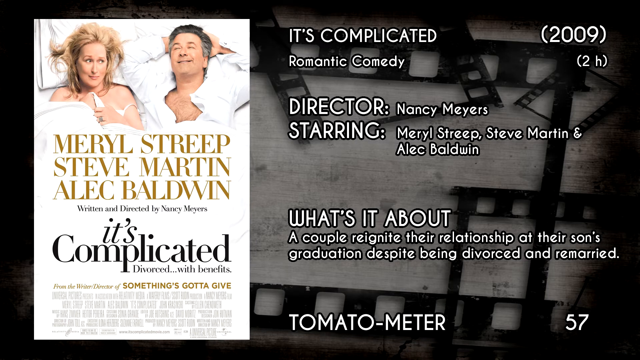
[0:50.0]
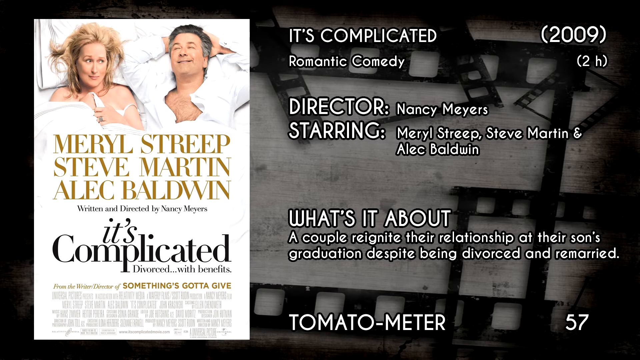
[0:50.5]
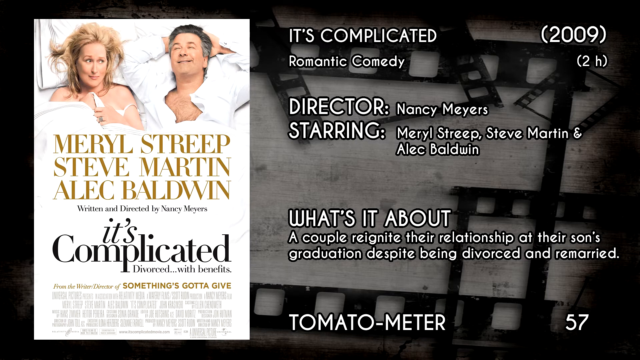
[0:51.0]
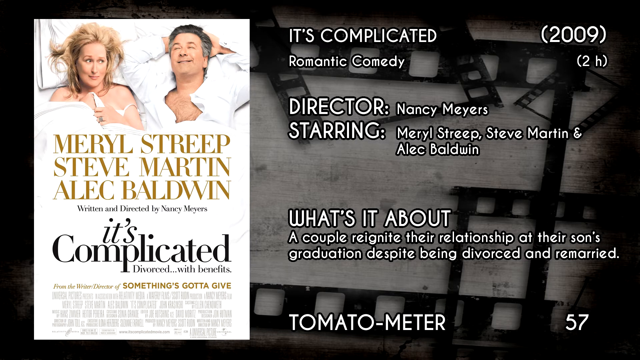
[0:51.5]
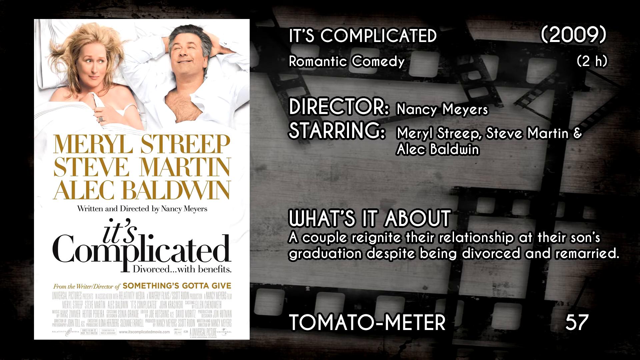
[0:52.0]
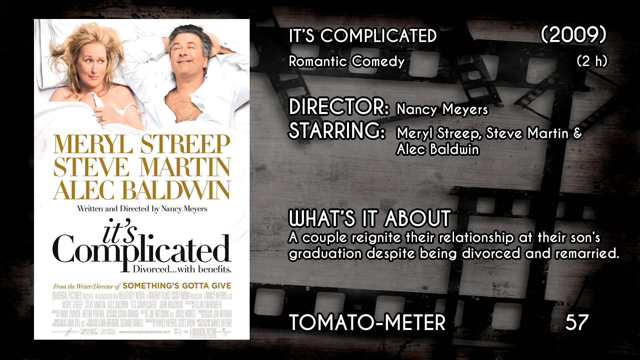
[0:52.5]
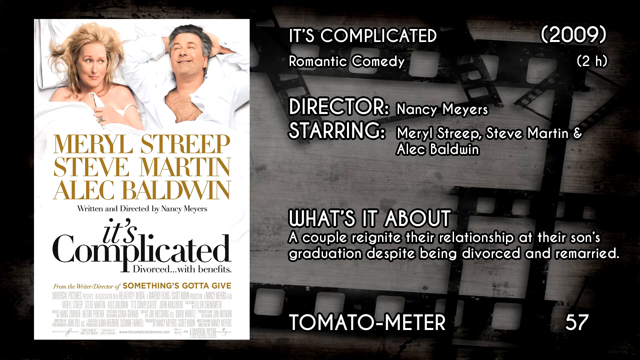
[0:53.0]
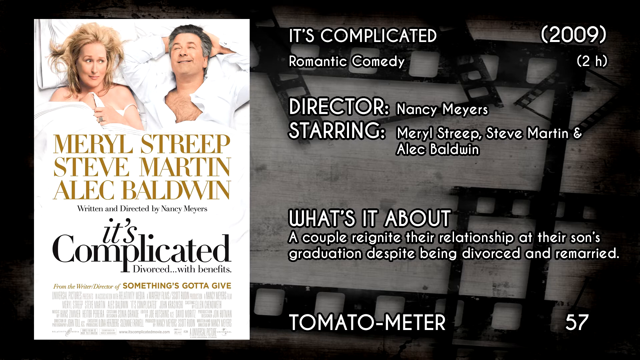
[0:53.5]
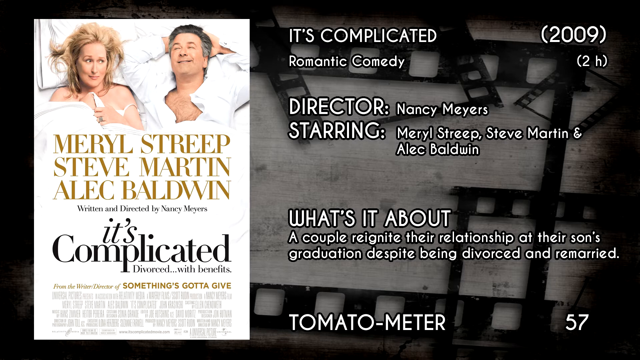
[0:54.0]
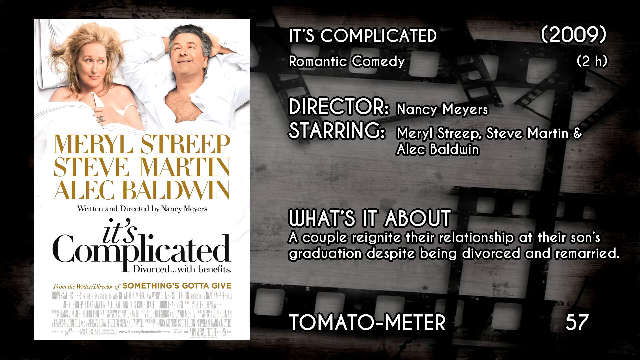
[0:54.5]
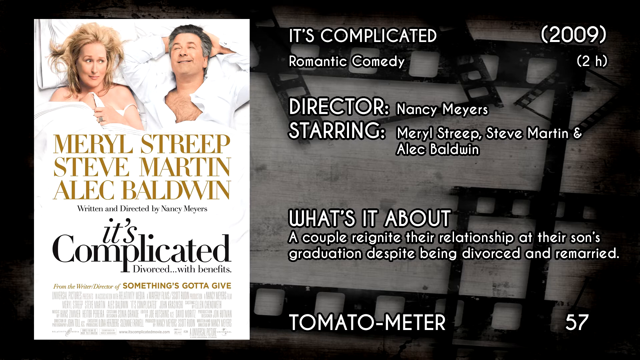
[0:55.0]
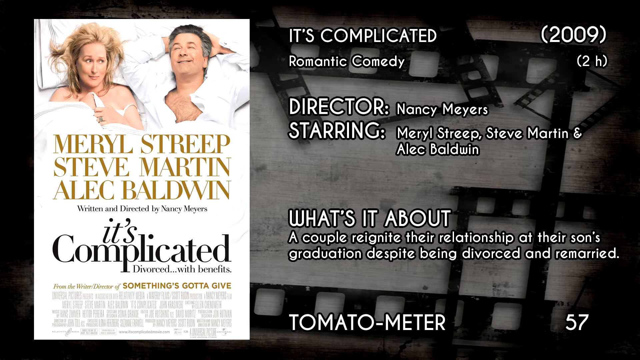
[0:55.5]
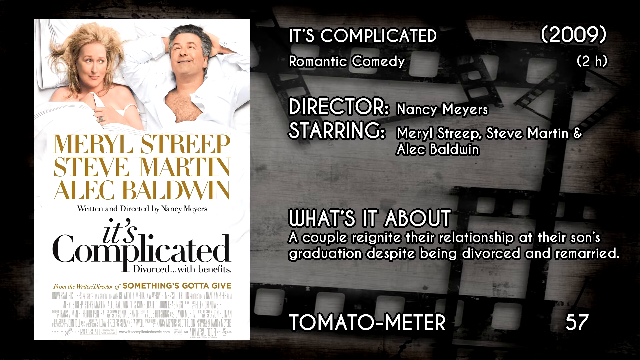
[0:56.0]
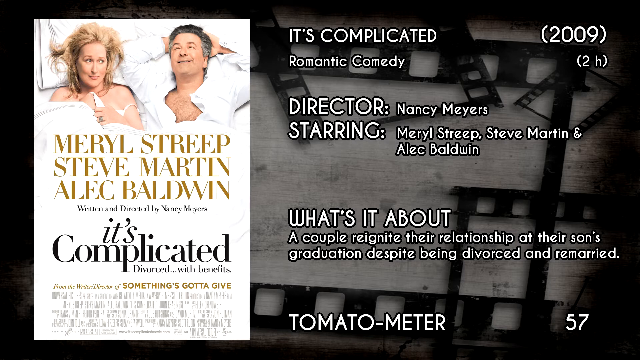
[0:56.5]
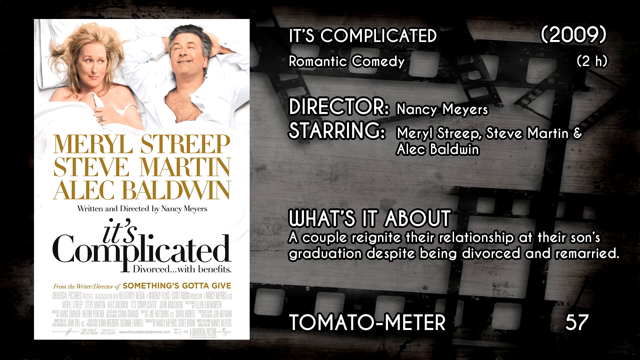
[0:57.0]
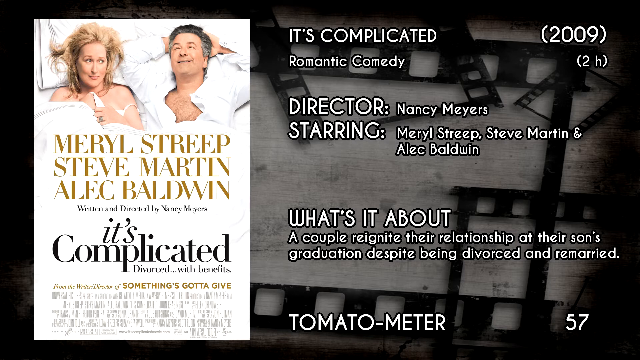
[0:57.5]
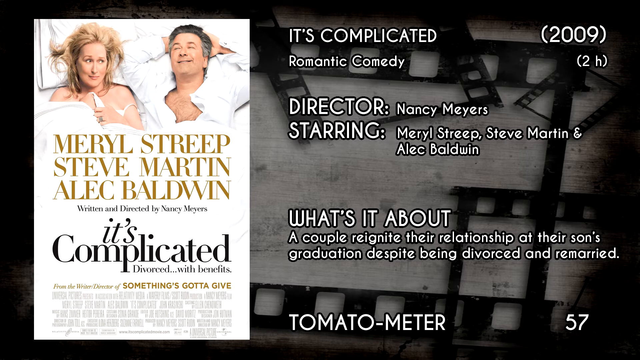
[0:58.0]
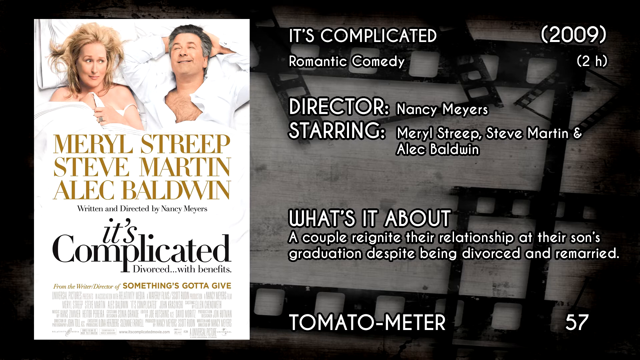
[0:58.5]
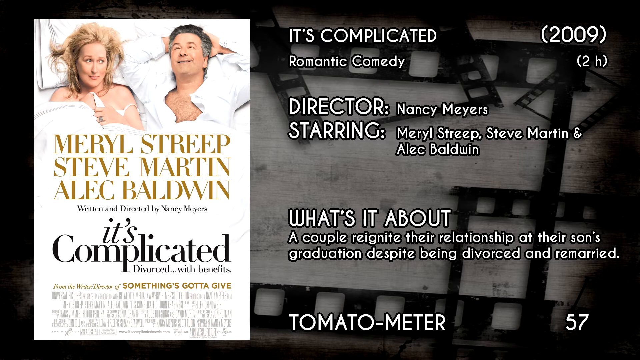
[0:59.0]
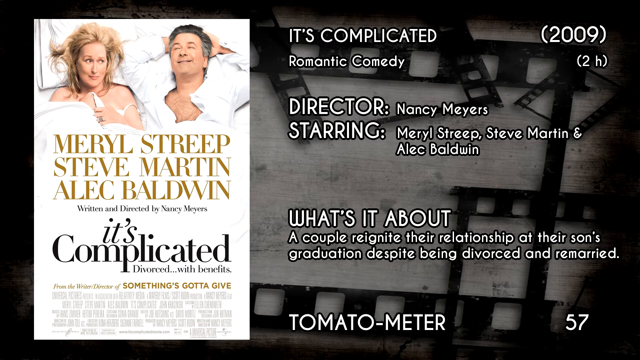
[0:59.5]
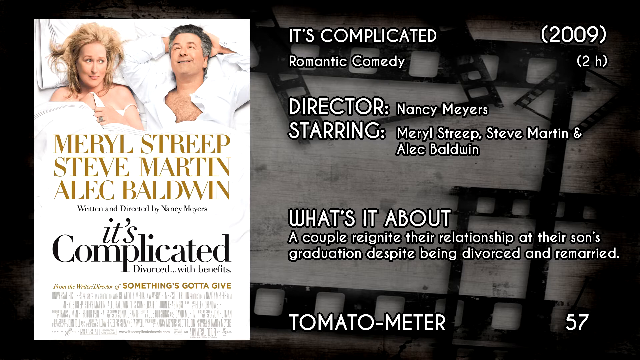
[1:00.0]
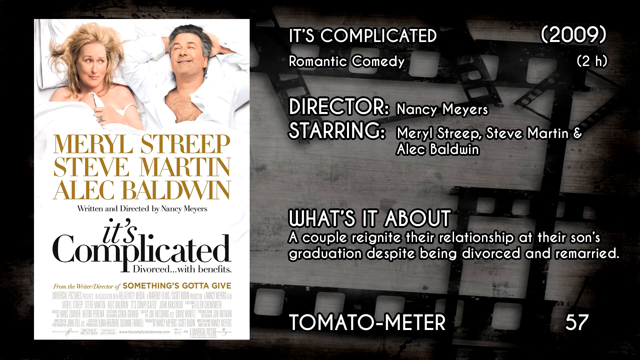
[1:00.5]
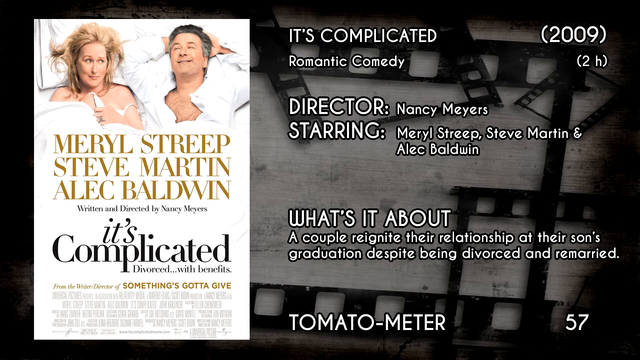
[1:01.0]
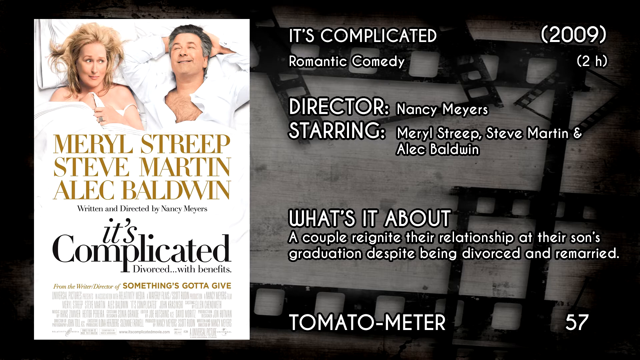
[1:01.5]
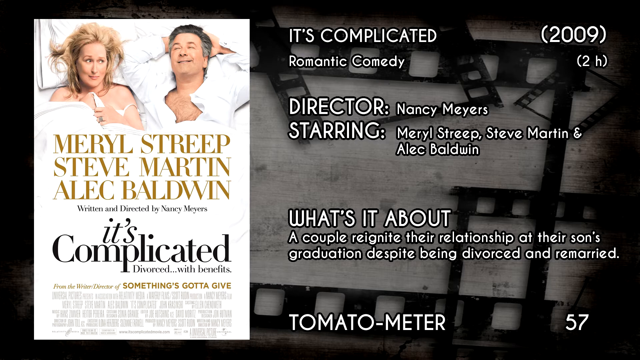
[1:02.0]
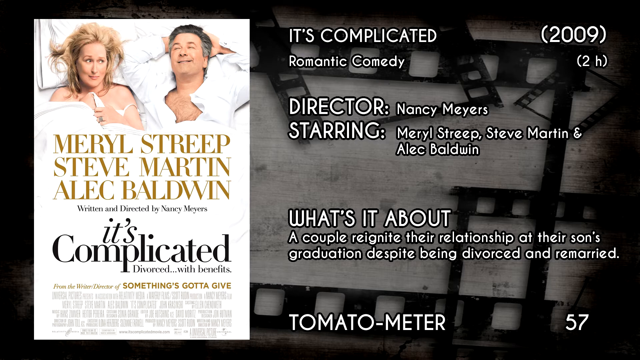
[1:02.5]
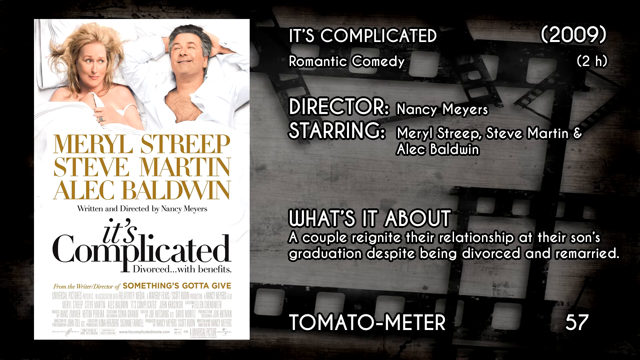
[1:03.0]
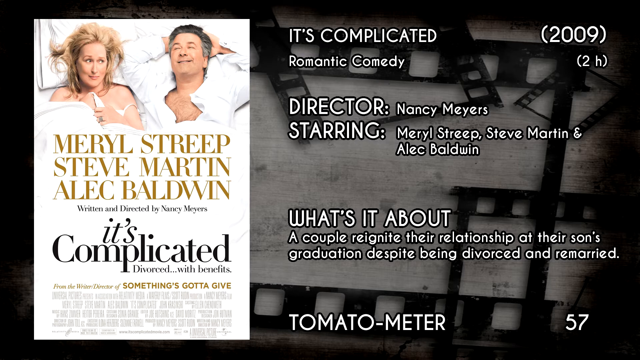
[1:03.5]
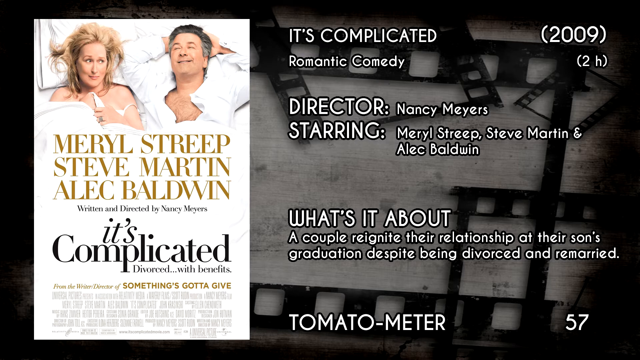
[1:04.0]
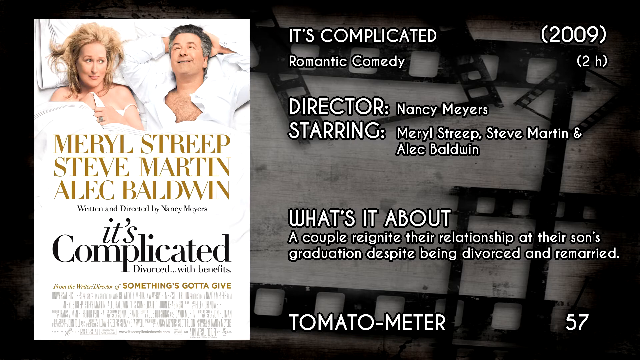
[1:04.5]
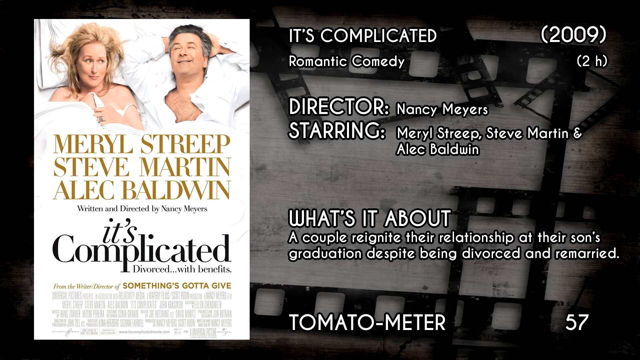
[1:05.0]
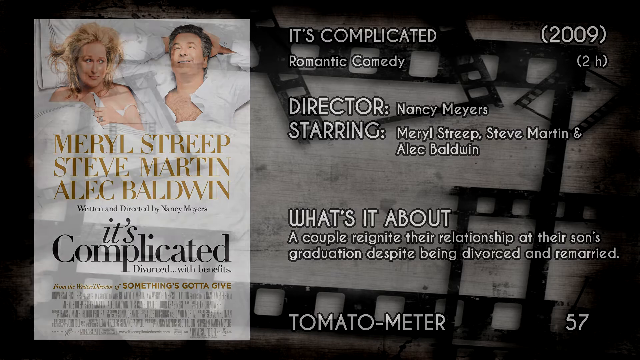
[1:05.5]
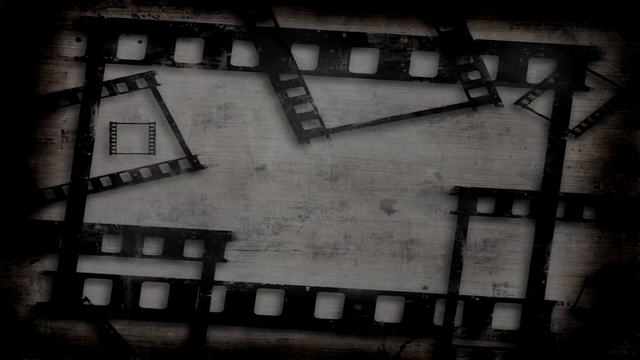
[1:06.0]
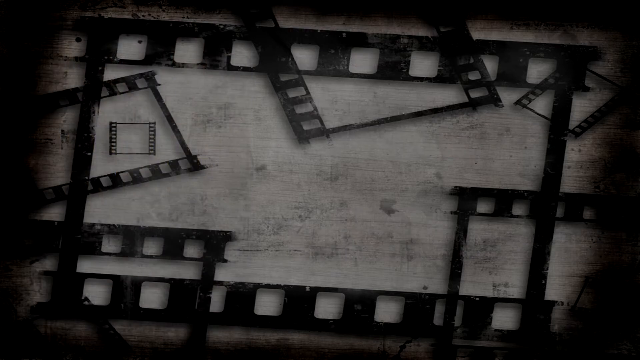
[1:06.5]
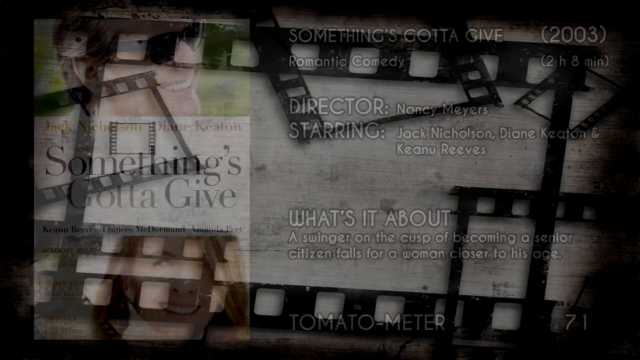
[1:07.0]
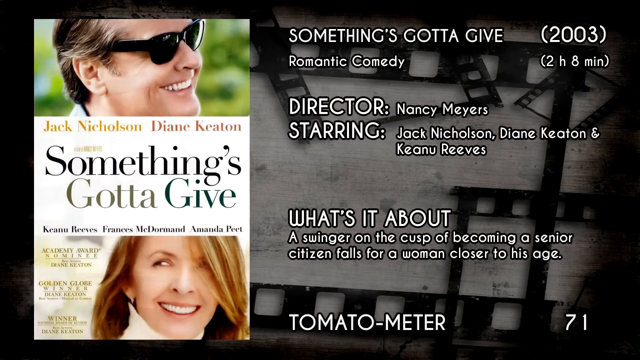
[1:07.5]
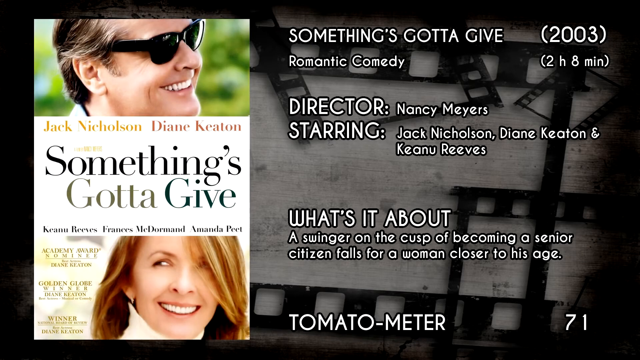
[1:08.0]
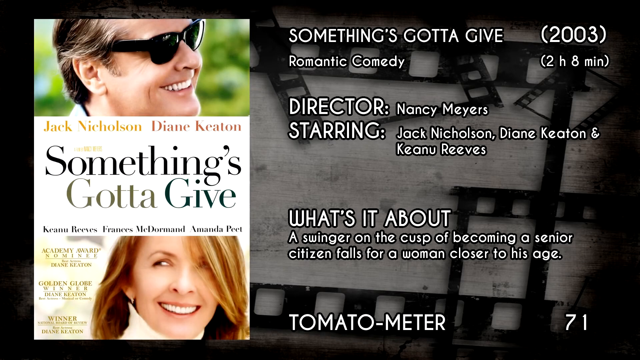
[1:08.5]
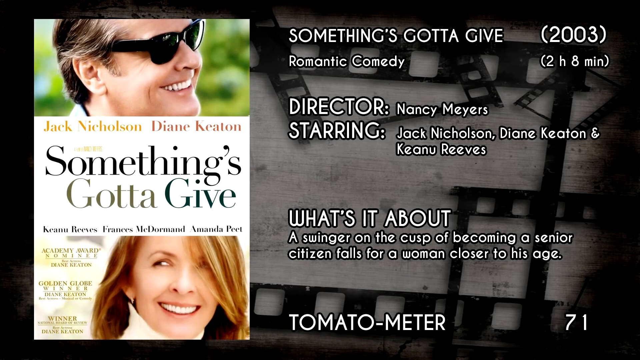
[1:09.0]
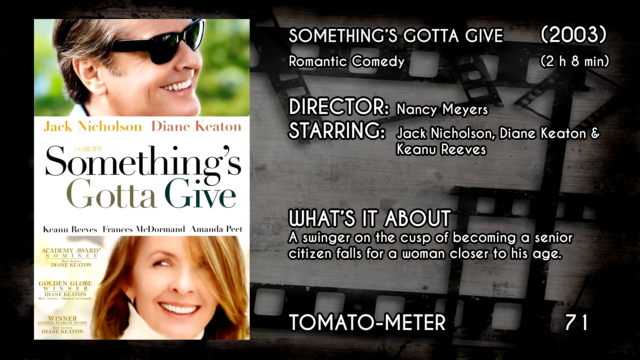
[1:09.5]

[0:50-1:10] Next comes the movie It's Complicated, a 2009 romantic comedy two hours long, directed by Nancy Meyers and starring Meryl Streep, Steve Martin and Alec Baldwin. It is about a couple who reunite their relationship at their son's graduation despite being divorced and remarried. Another film then appears, Something Gotta Give, by director Nancy Meyers, with Jack Nicholson, Diane Keaton and Keanu Reeves.